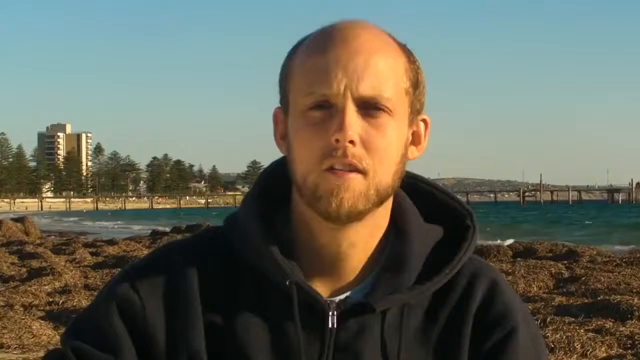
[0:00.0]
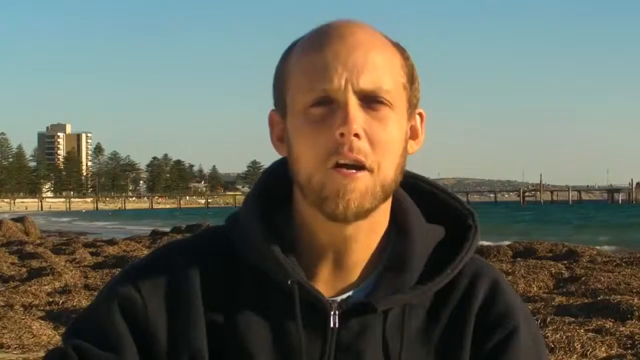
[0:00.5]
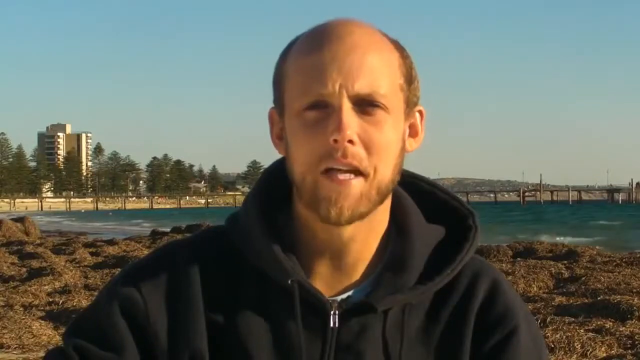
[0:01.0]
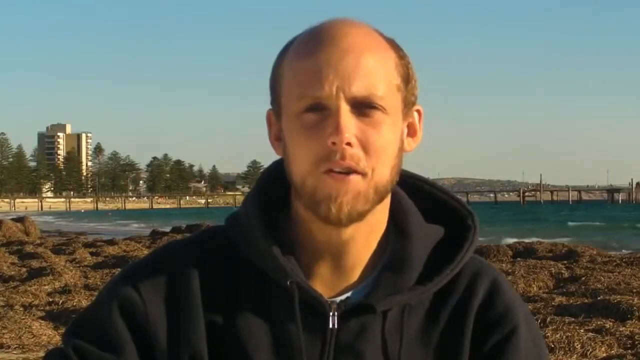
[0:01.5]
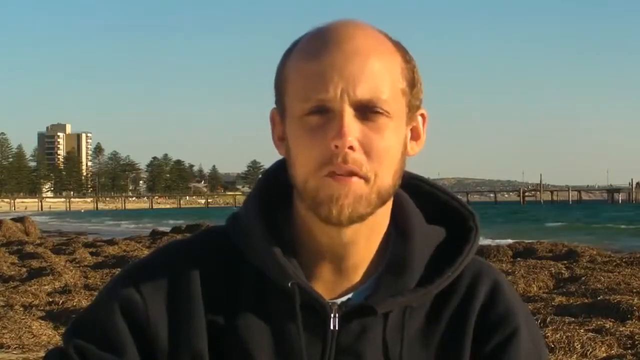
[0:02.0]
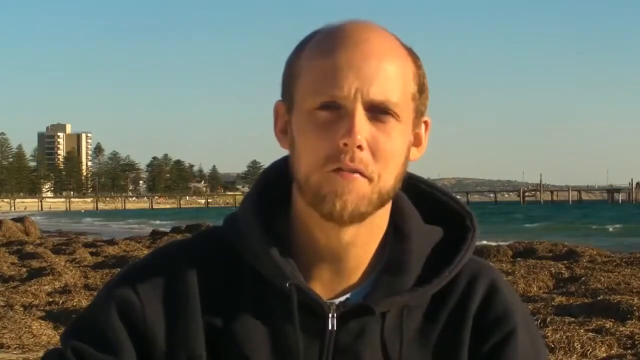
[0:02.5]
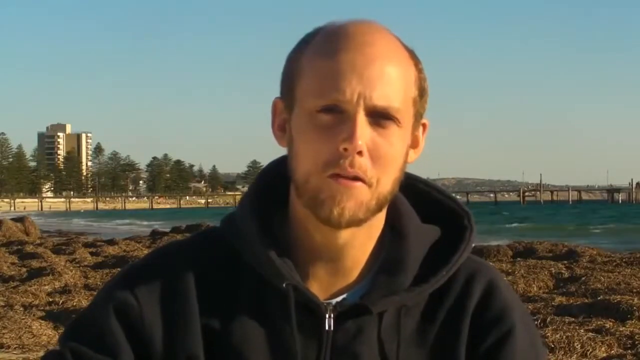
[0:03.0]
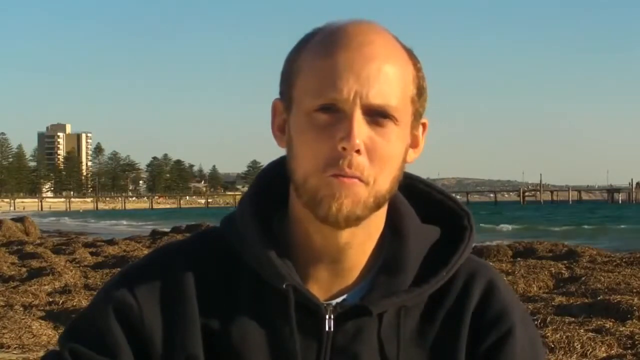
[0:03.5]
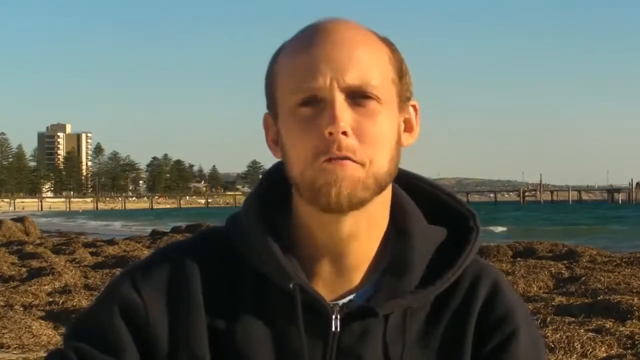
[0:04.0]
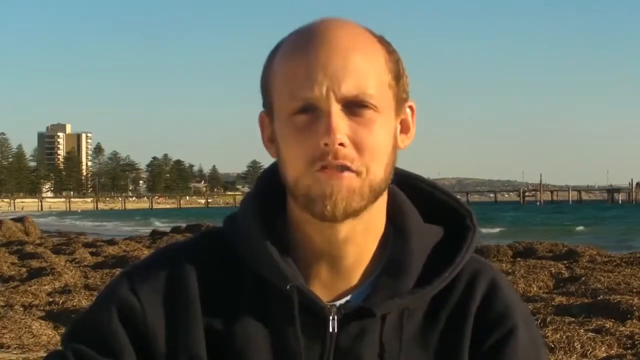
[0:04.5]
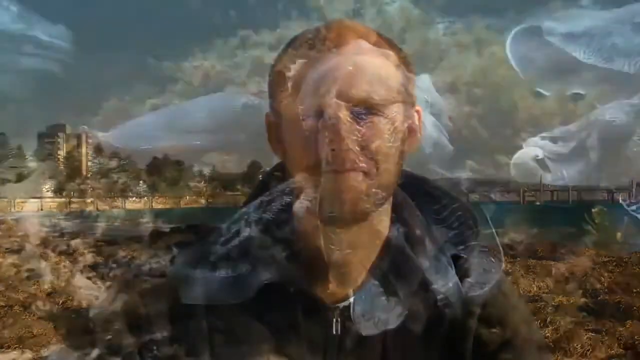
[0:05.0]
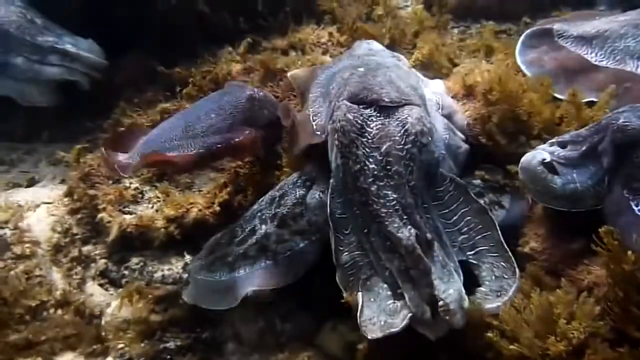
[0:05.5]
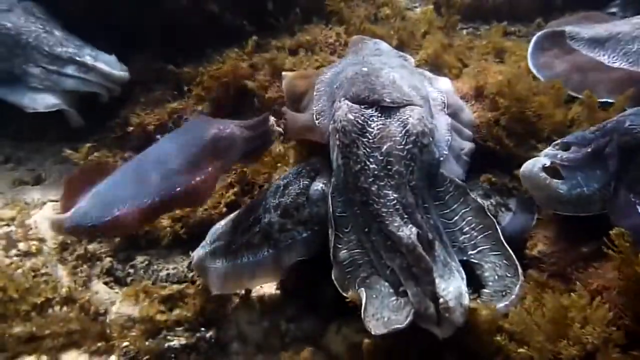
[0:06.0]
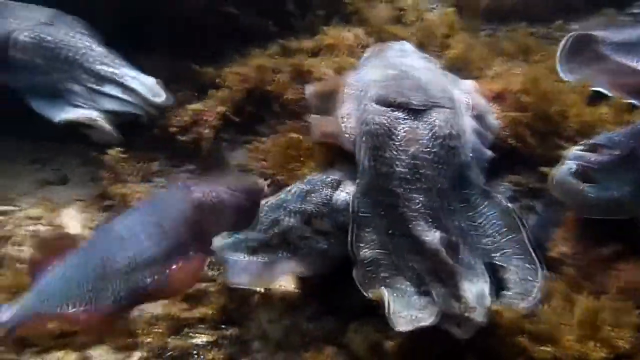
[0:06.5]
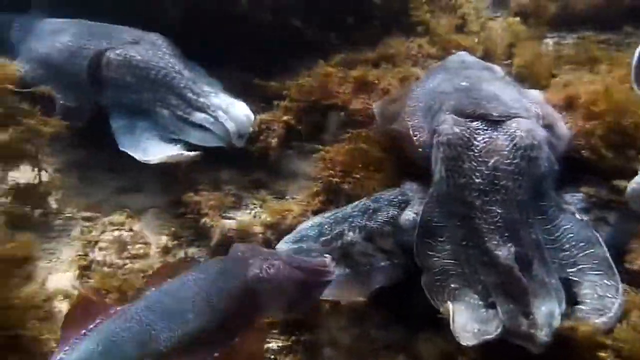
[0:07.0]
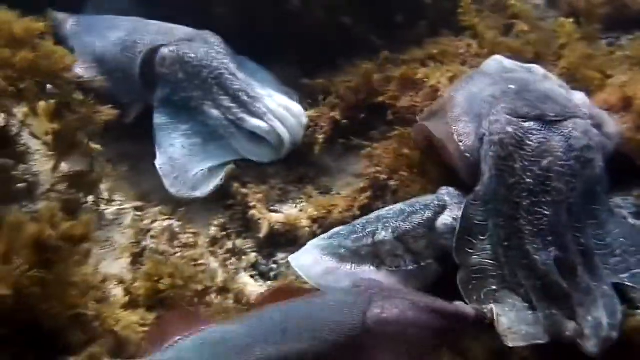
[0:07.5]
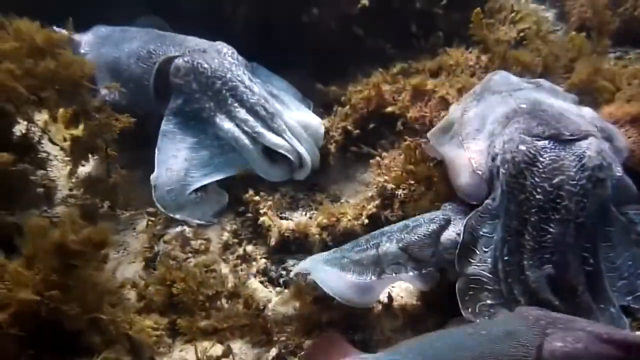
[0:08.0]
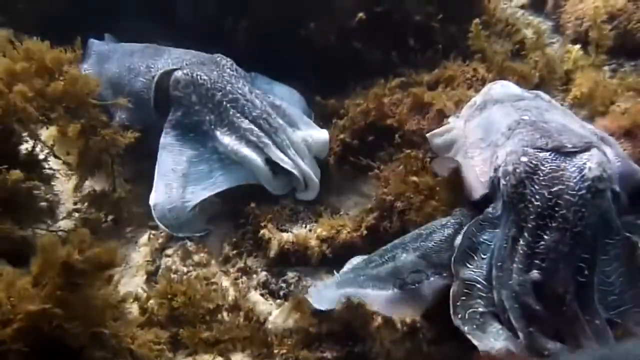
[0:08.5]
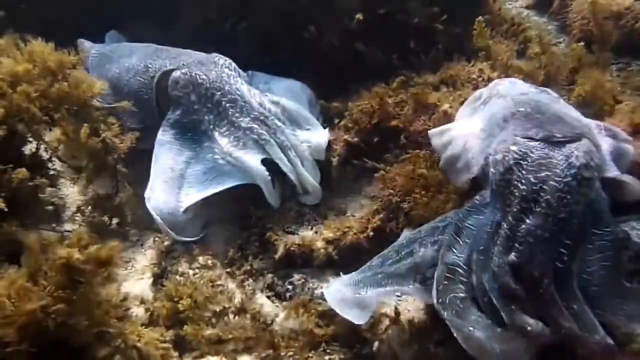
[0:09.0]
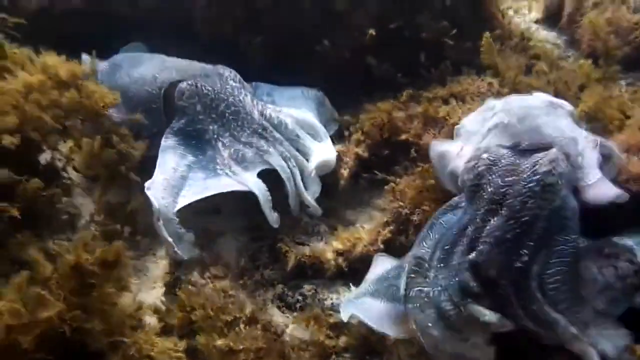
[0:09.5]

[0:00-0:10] A bald man with a beard looks at the camera and talks. He wears a dark blue hoodie with the hood down. Behind him are a beach and the ocean with lots of waves coming in, with some landscape further in the background, a blue sky, and a building to the left. The shot cuts to some kind of ocean creatures, possibly cuttlefish; they could be fish but something about them is not fish-like. They swim around the ocean floor.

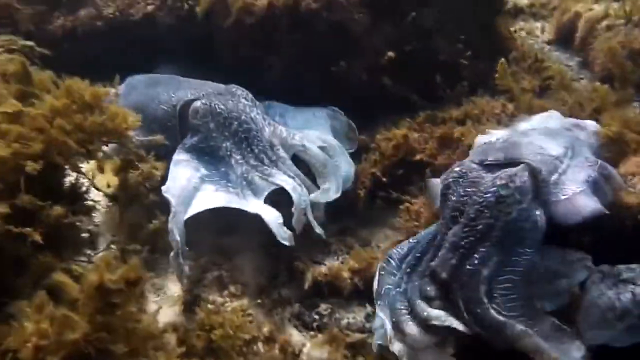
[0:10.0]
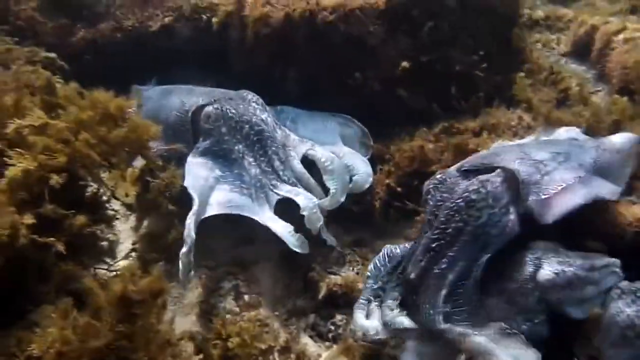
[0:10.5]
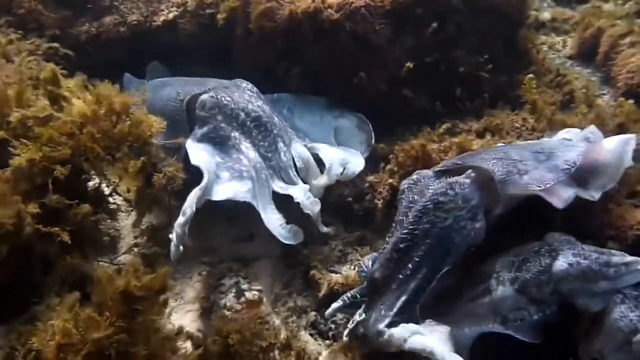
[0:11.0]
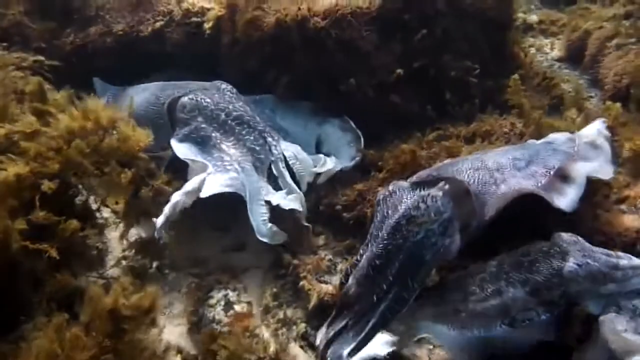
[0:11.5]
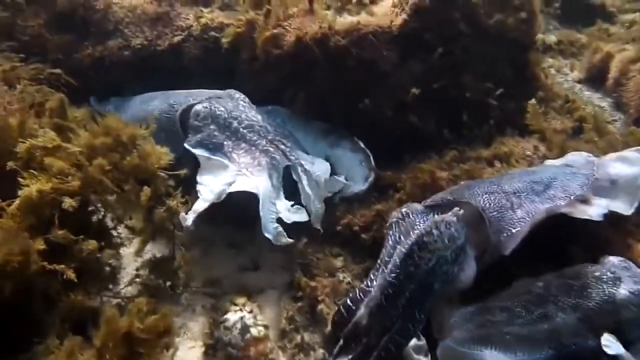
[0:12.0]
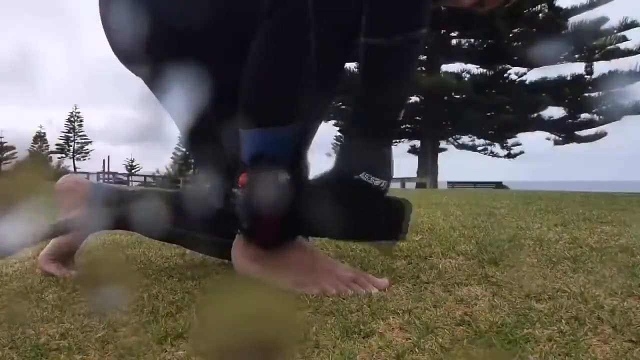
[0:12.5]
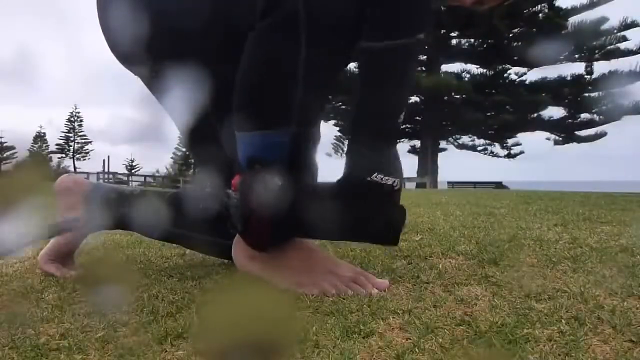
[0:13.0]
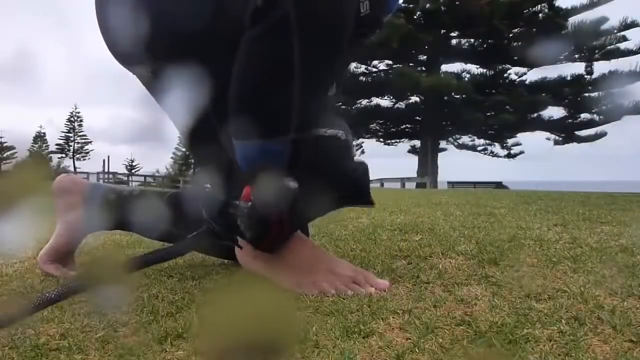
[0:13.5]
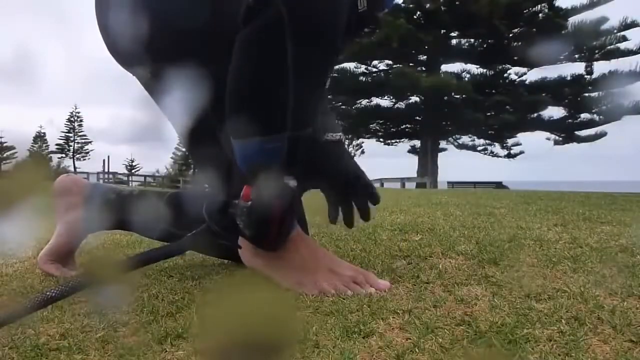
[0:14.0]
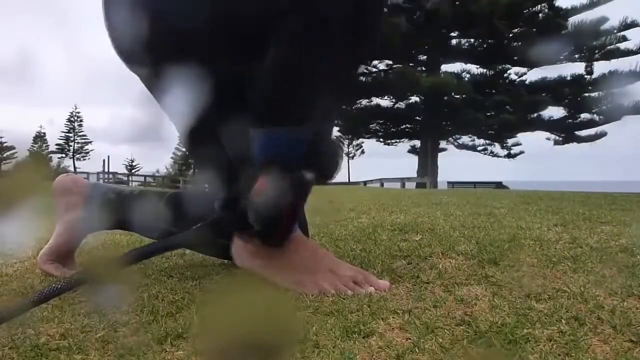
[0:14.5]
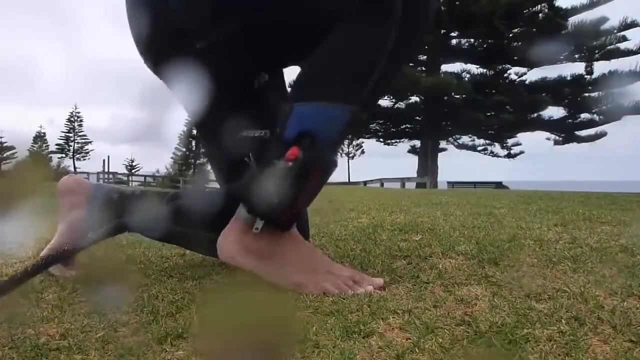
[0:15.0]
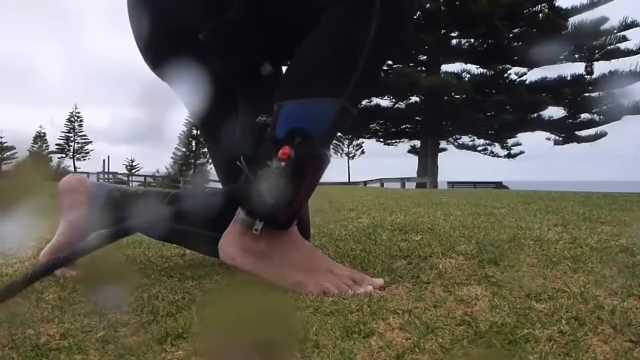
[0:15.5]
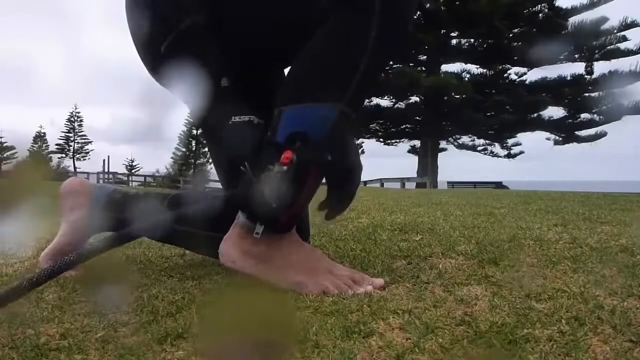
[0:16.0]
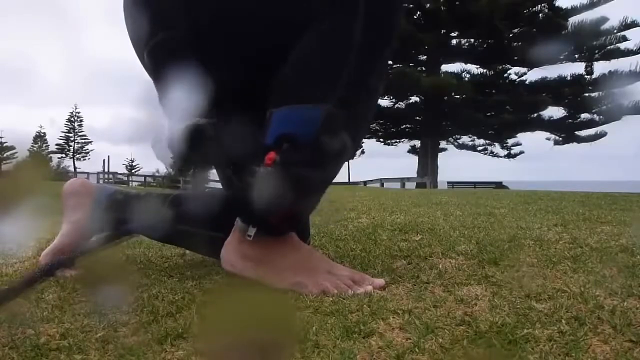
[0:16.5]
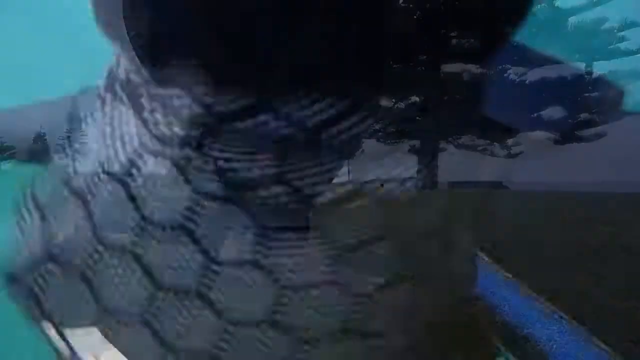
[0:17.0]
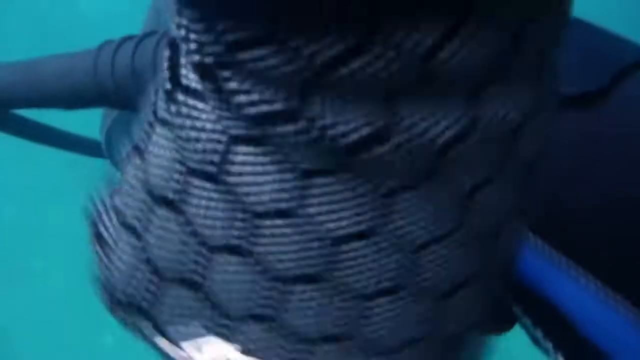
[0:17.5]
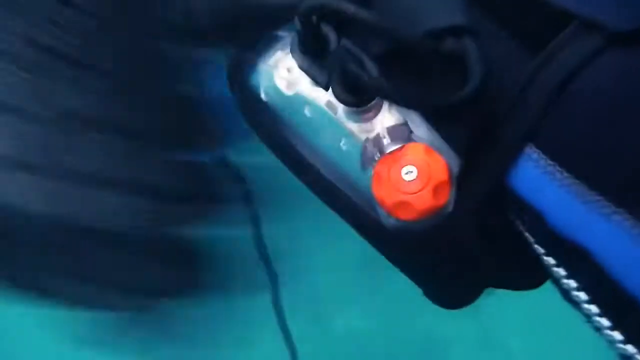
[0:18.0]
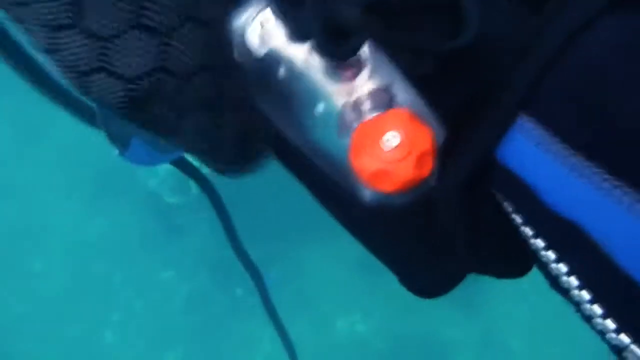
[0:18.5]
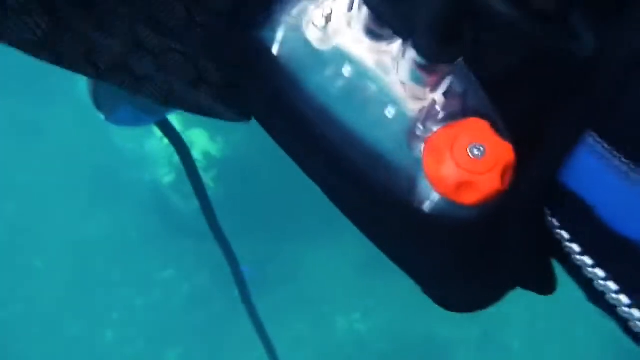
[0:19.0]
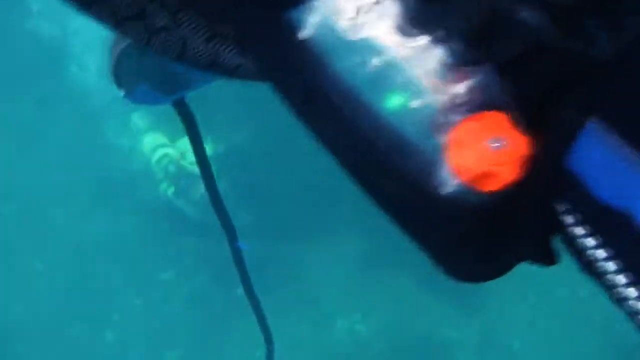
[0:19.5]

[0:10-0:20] The sea creatures continue swimming around the ocean floor. The scene cuts to a person kneeling down on one knee; the top half of their body is not visible. They wear black, apparently a diving suit, and strap something to their right ankle. Next comes a shot of them in the water, apparently a close-up of the thing strapped to their ankle: some kind of gadget hooked up to a line. Beyond it, in the background, another diver is briefly visible below.